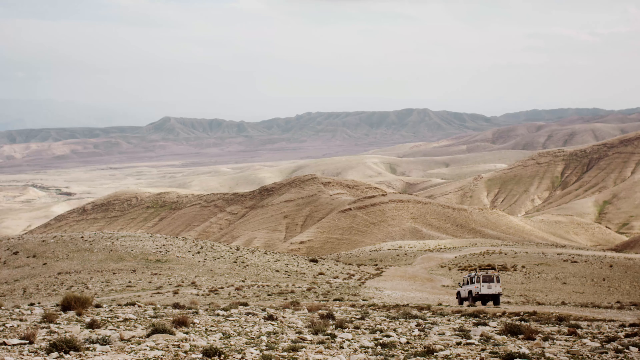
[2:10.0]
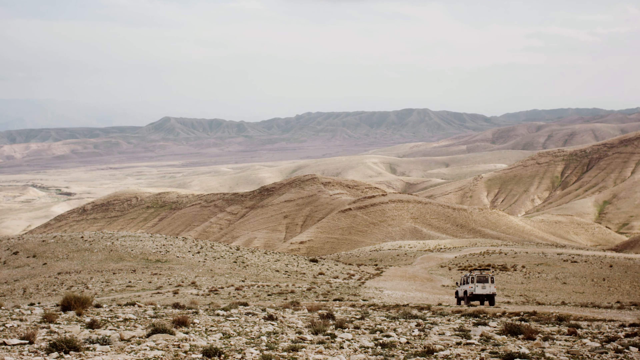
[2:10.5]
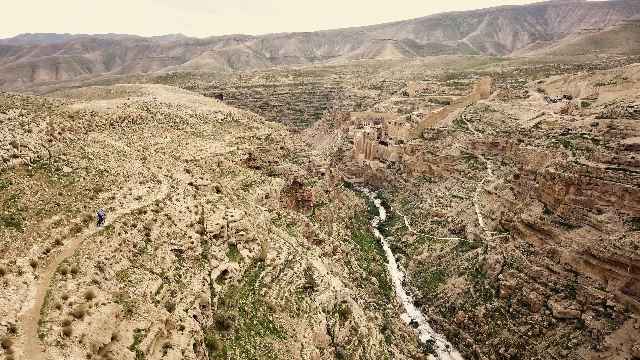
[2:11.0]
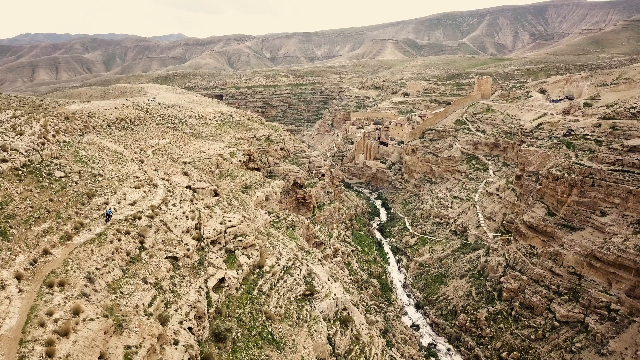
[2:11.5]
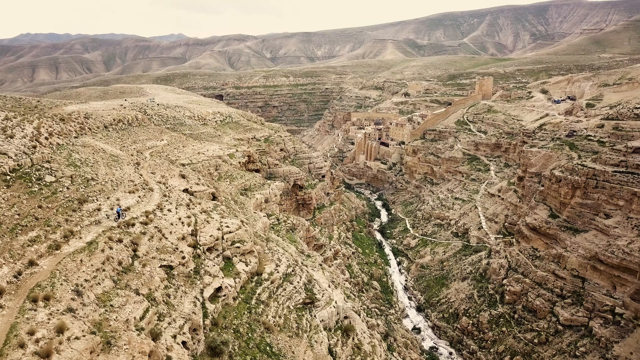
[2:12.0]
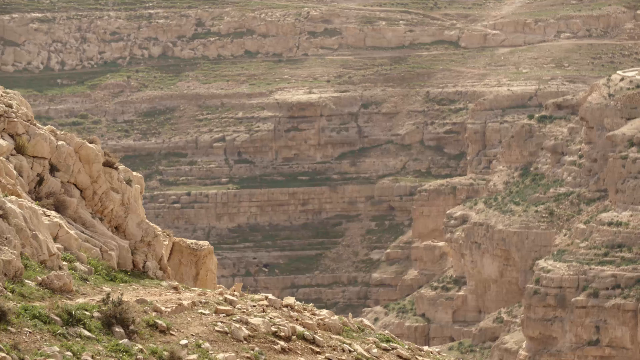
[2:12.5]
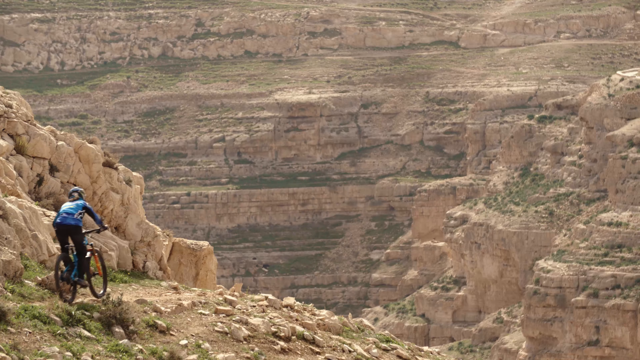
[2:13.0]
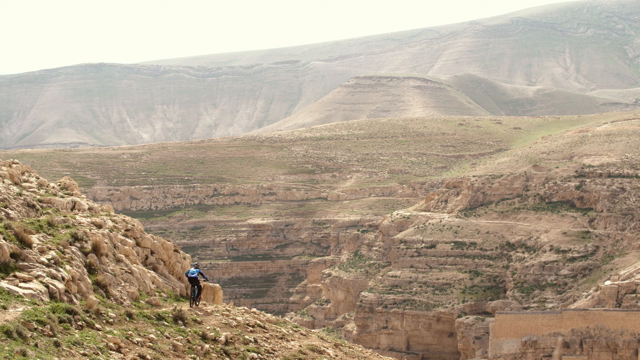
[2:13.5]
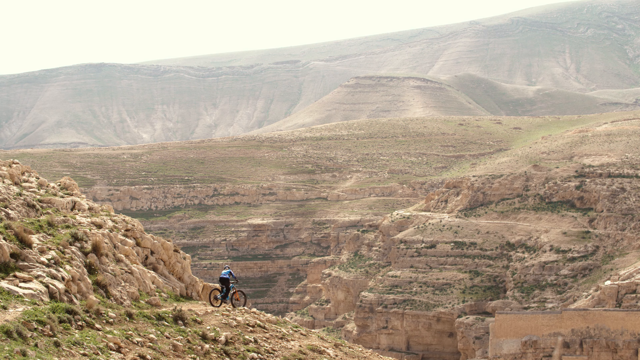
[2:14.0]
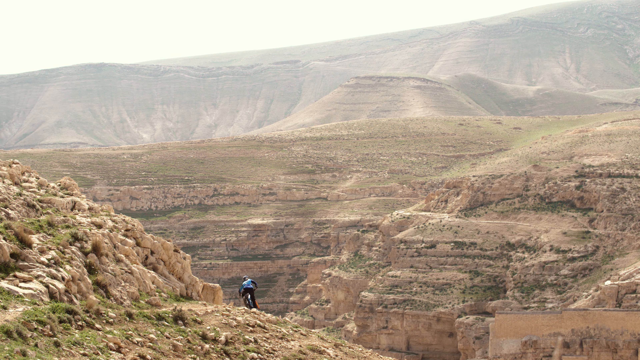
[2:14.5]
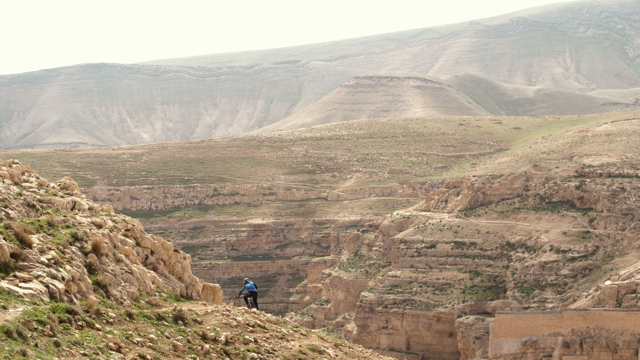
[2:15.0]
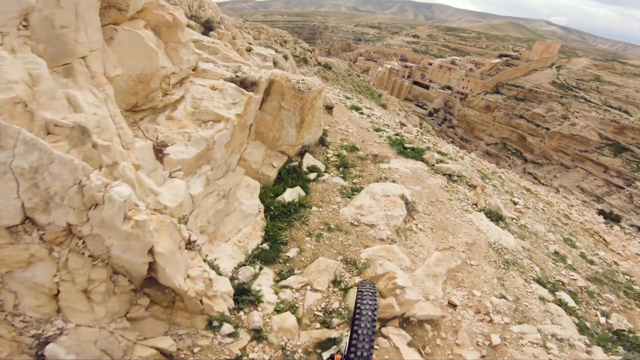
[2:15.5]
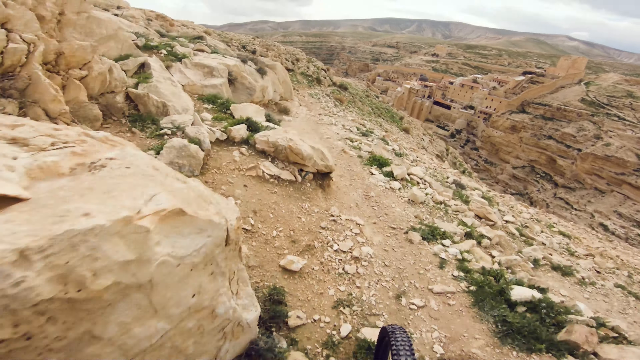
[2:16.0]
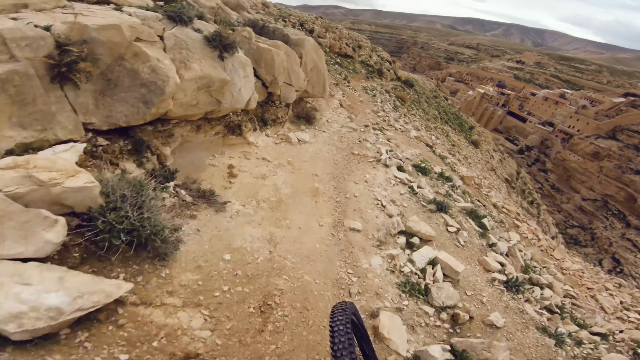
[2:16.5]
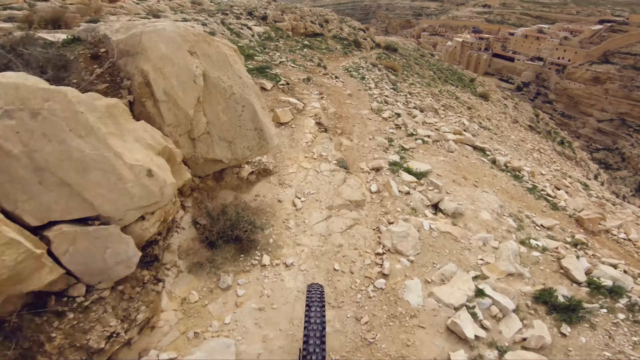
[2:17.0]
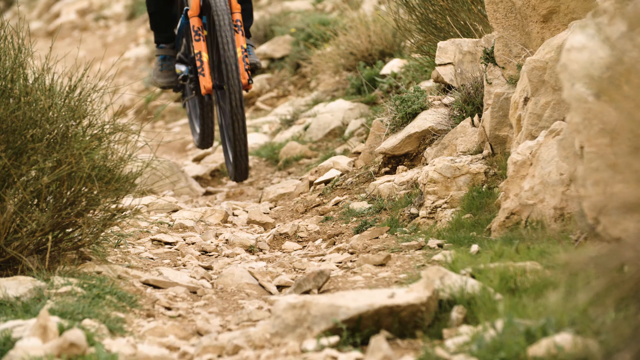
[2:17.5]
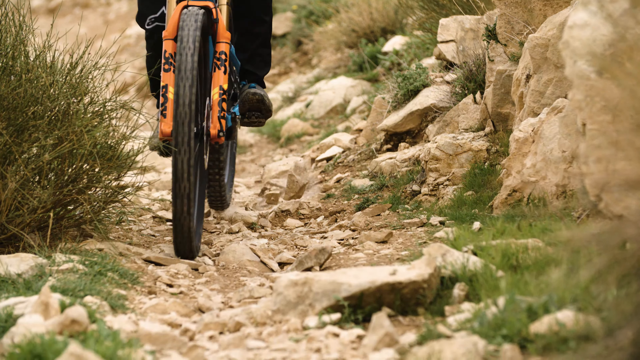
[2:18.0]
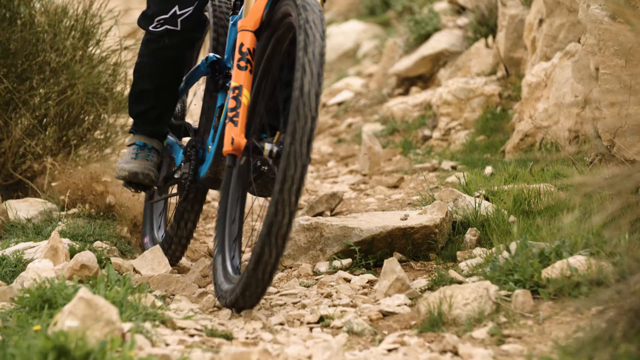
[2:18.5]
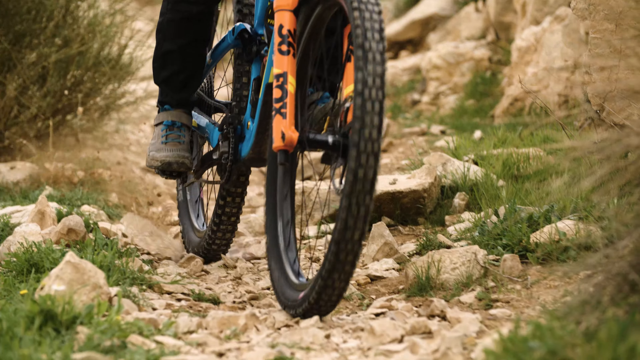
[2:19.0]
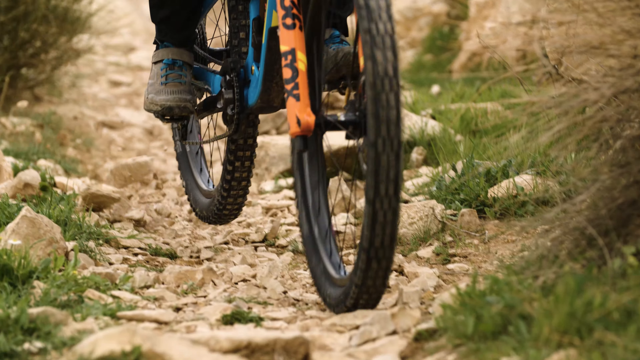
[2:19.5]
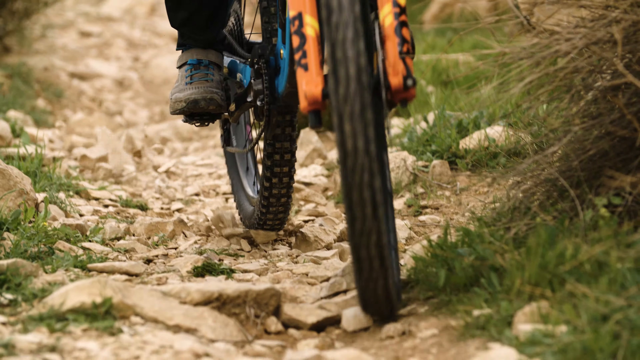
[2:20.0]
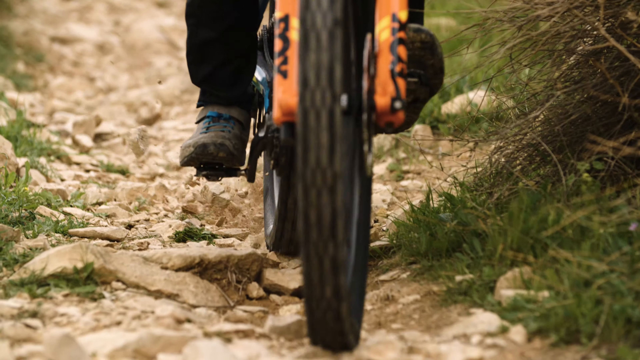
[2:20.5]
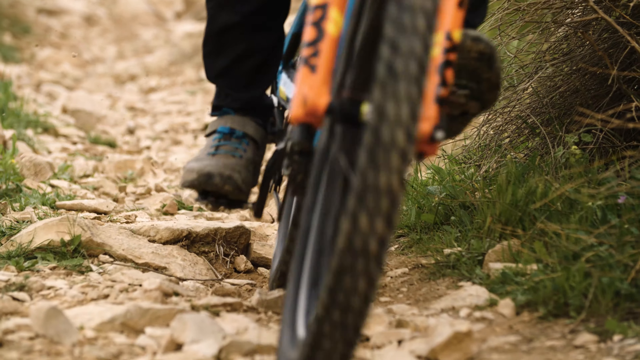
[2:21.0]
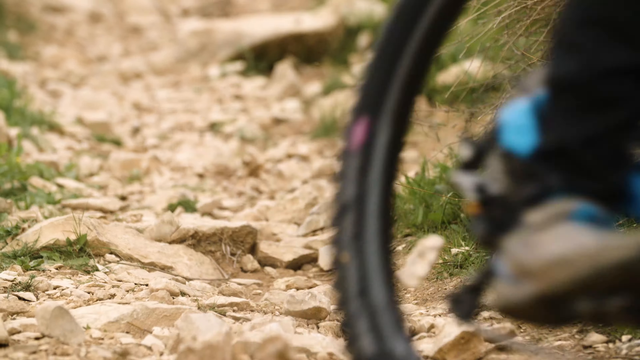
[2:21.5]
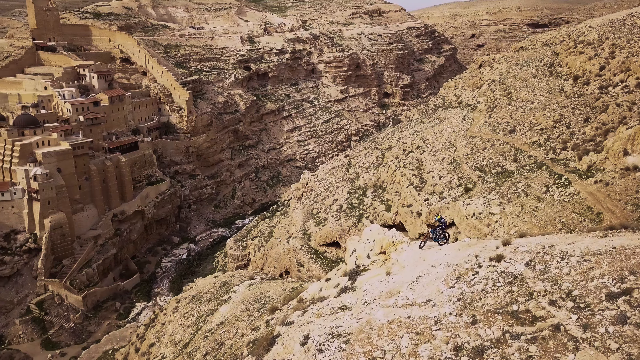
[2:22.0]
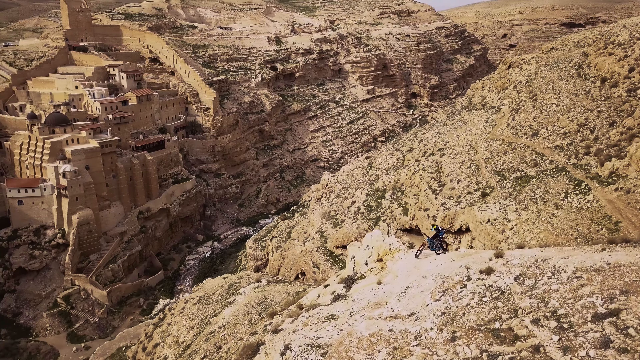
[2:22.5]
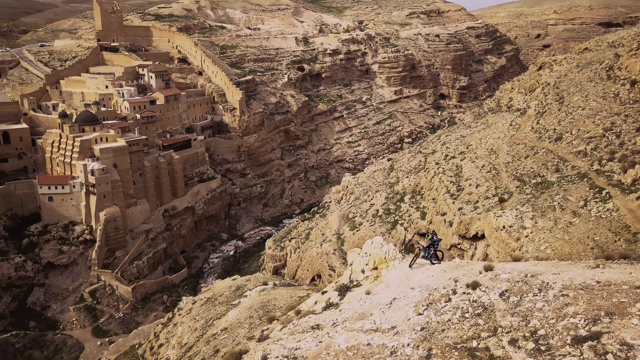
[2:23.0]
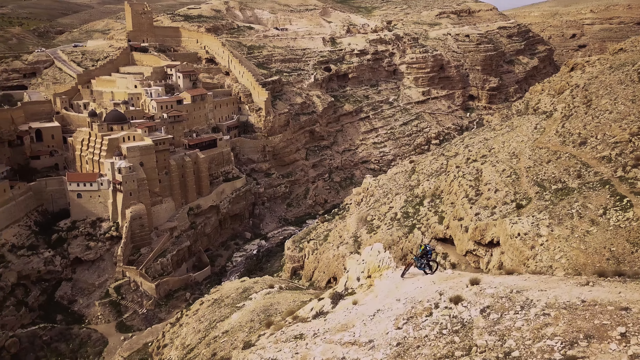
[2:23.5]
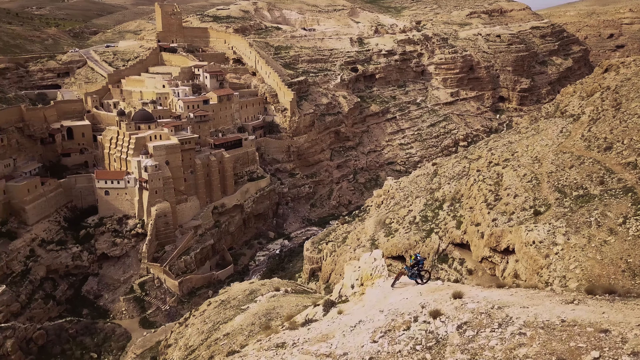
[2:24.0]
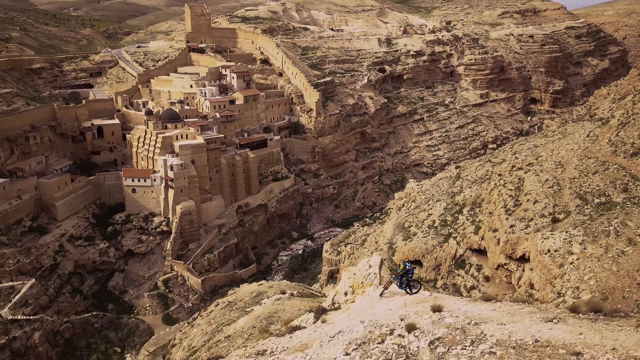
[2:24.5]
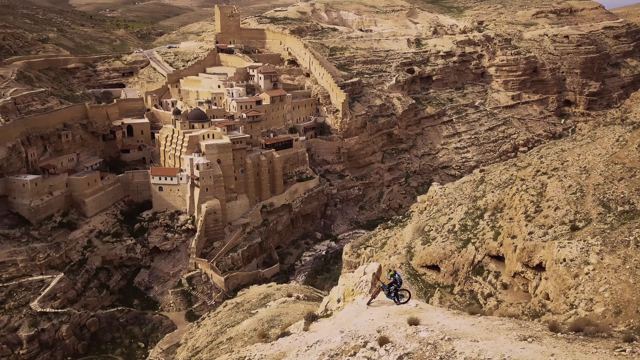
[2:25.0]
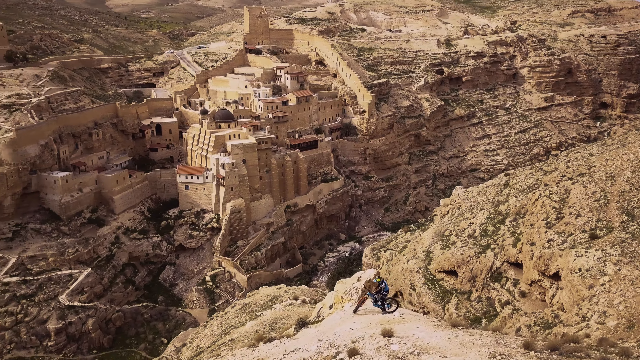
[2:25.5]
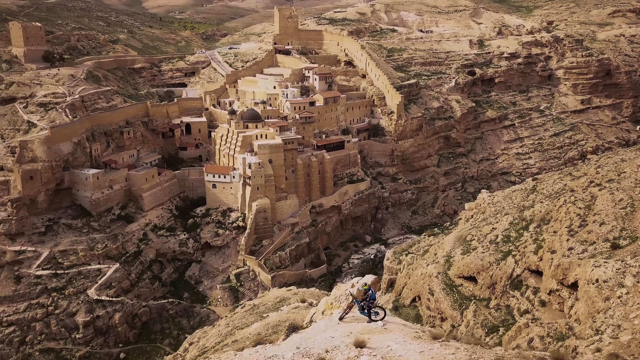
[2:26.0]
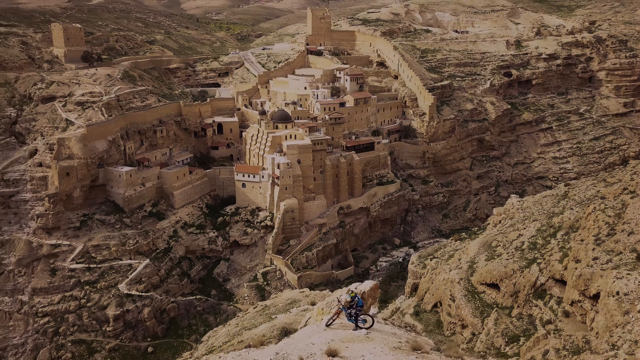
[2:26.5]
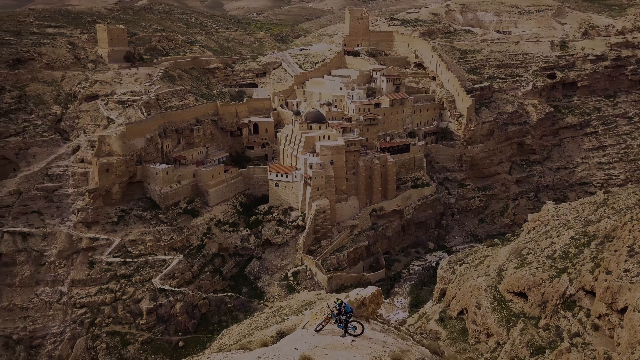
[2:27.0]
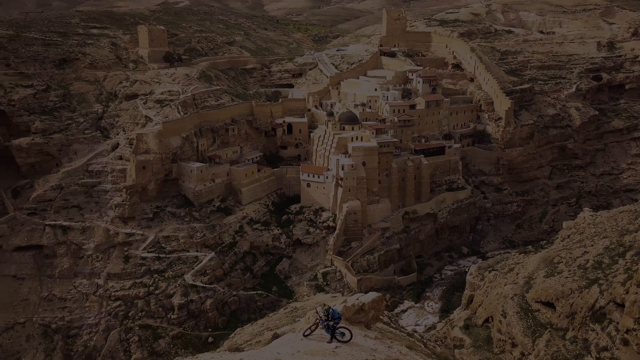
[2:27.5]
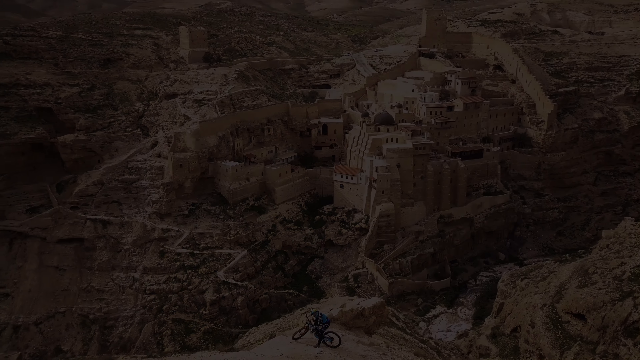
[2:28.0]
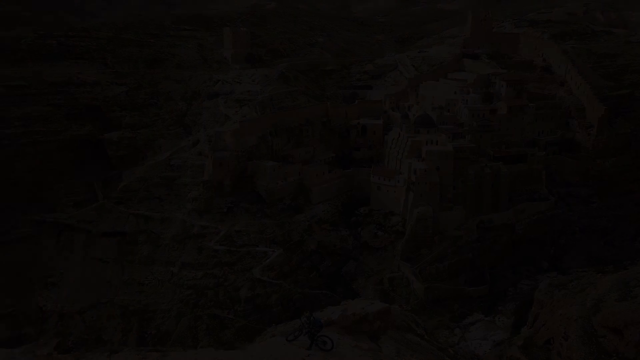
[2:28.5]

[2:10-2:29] An overhead view shows an area, probably in the western United States, of mostly dirt with many hills and cliffs. The middle seems to be almost a valley, with some green grass and shrubbery. In the far background are what look like mountains, almost like the Rocky Mountains, with a little sky above. Far away, the bicyclist rides down a pathway on the left. The view then moves closer in the same terrain, showing the bicyclist in a light blue shirt. A first-person view shows only the front tire going down a dirt pathway in the same rocky area. In another view the bike comes toward the camera, showing only its wheels and the rider's shoes; it slows as though in slow motion as it approaches, then turns away. In a final view of an unidentified location, the bicyclist is parked in the lower right corner on a hill, with other hills and cliffs in the upper left. There is a rocky face in the upper left that almost looks like a man-made town, like old Mayan or Aztec ruins, and she is across from it as the camera swirls counterclockwise.